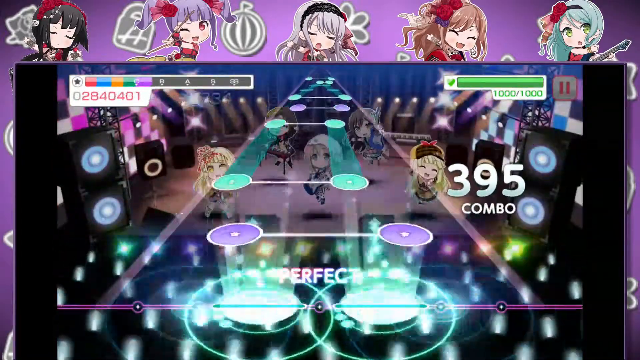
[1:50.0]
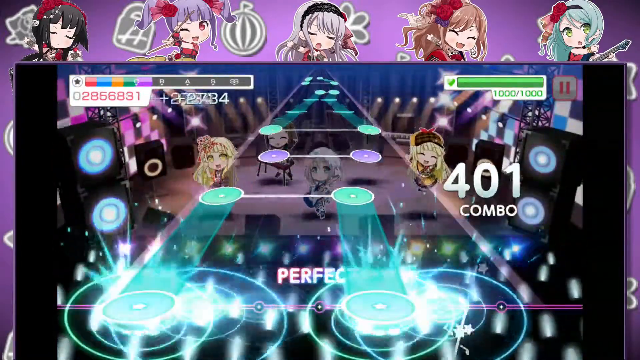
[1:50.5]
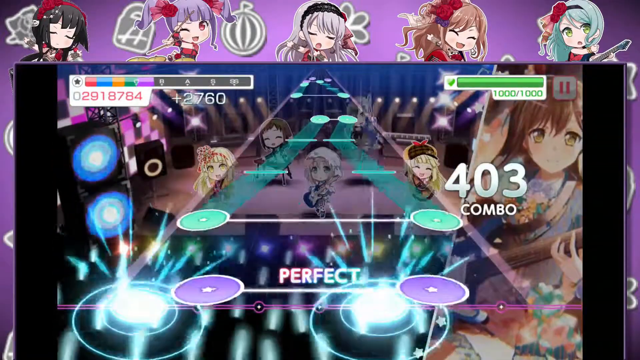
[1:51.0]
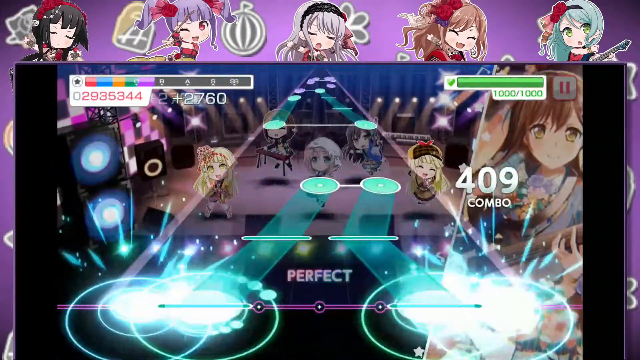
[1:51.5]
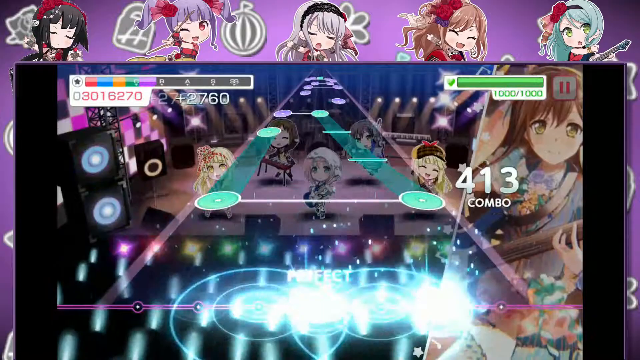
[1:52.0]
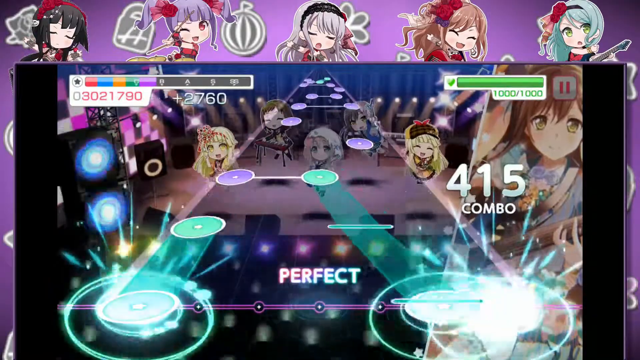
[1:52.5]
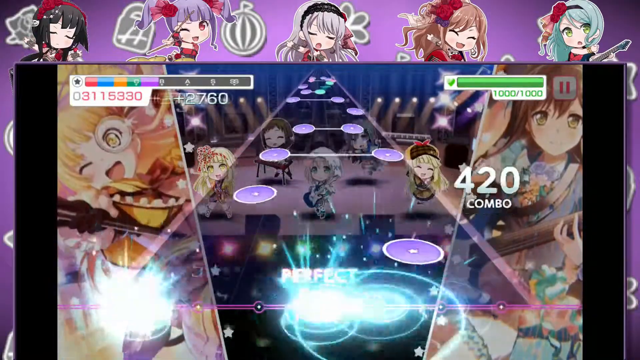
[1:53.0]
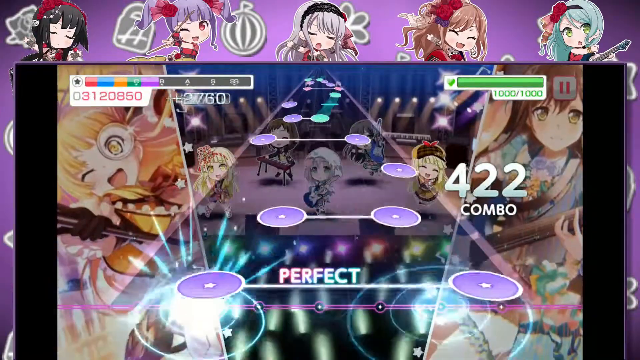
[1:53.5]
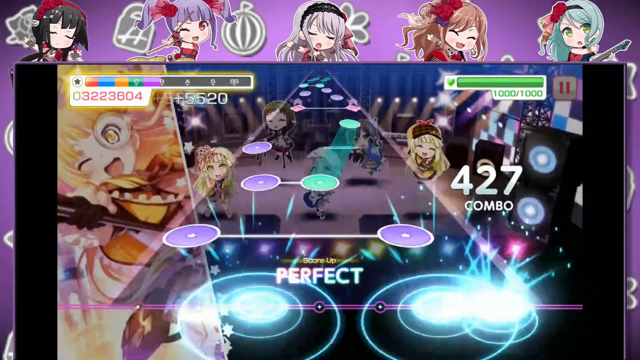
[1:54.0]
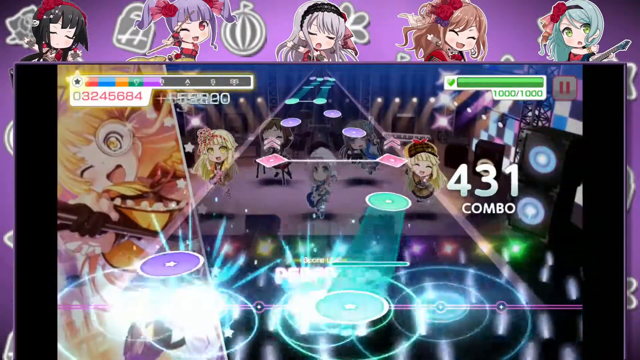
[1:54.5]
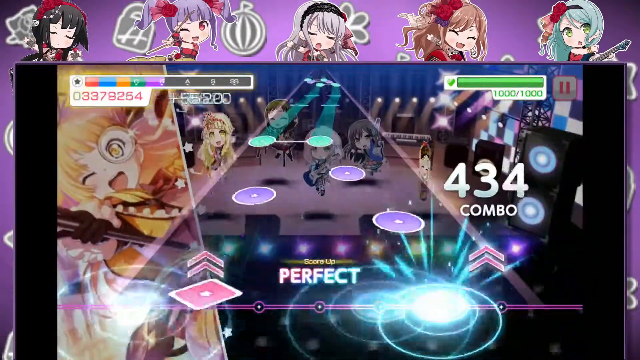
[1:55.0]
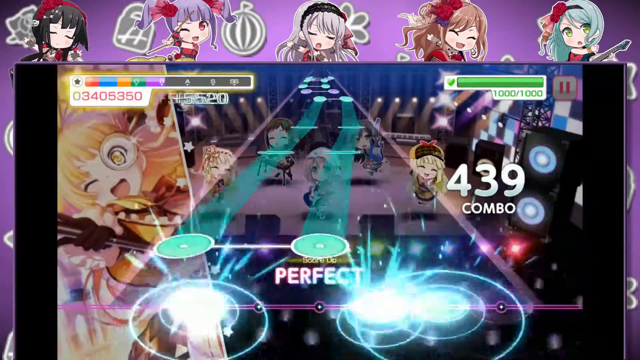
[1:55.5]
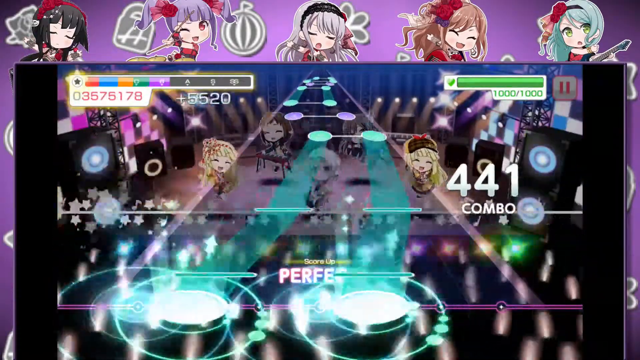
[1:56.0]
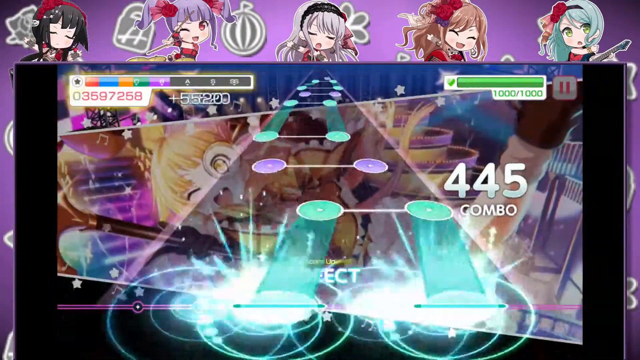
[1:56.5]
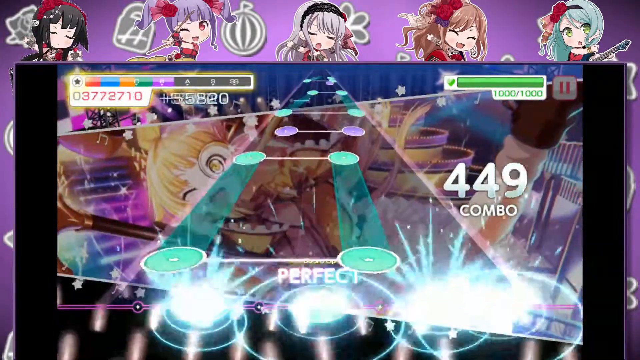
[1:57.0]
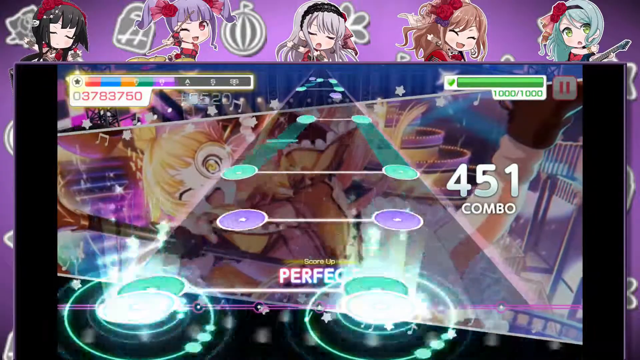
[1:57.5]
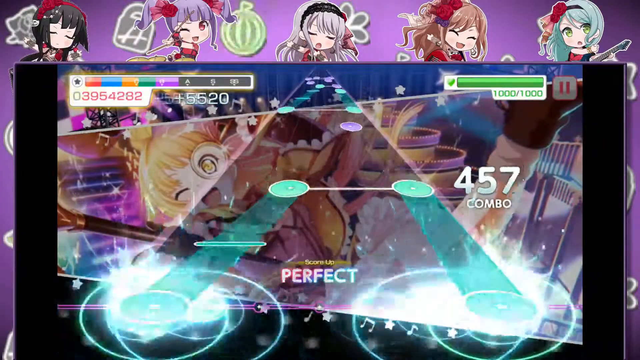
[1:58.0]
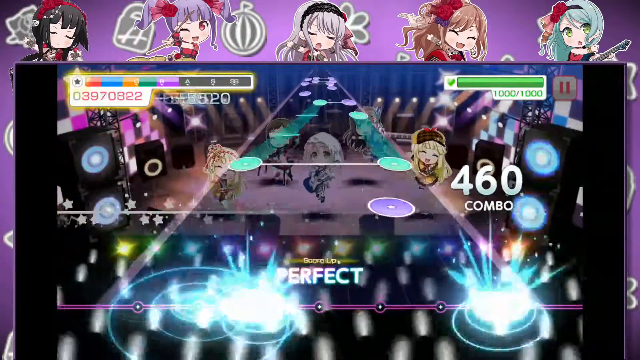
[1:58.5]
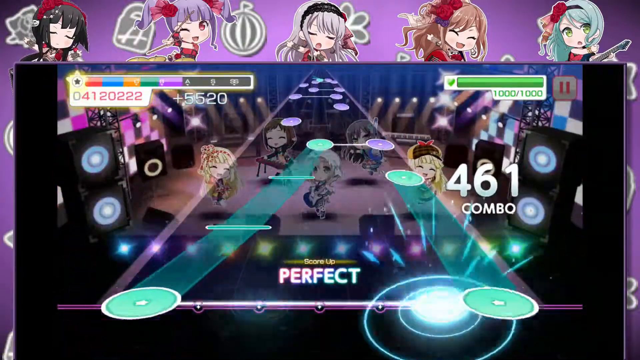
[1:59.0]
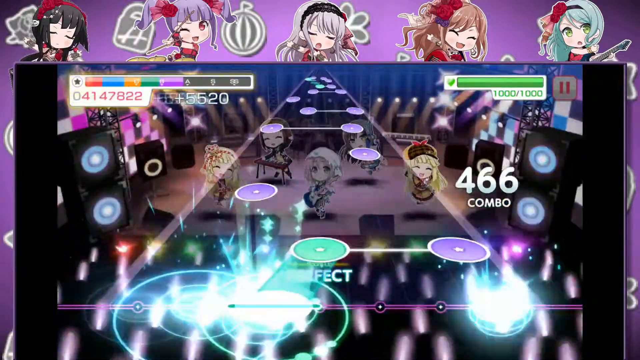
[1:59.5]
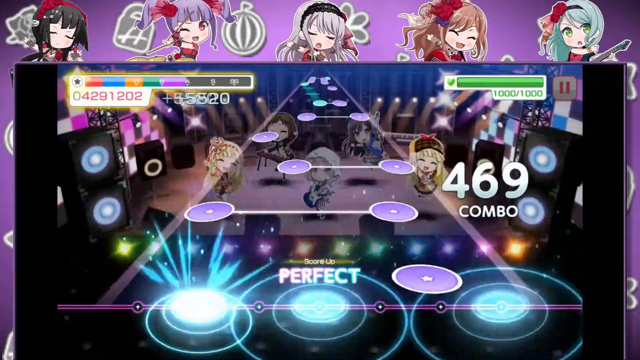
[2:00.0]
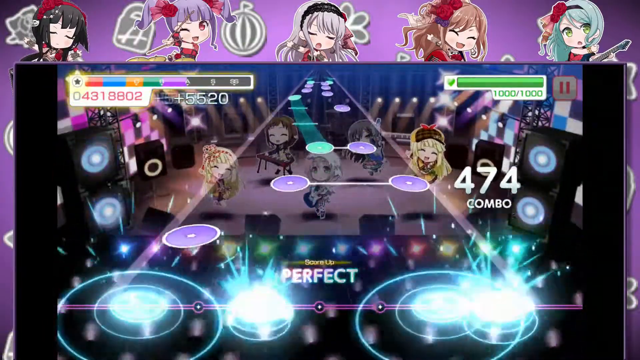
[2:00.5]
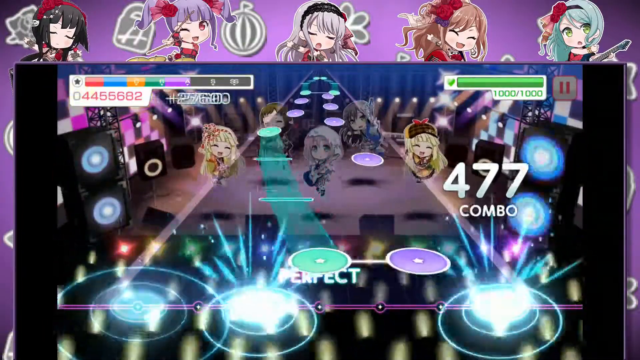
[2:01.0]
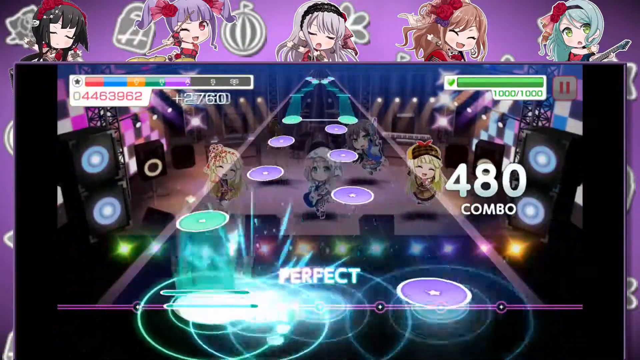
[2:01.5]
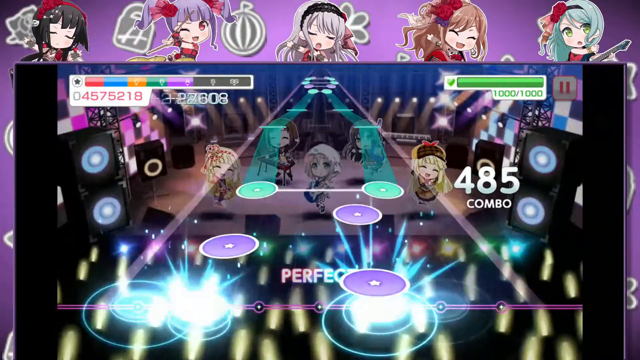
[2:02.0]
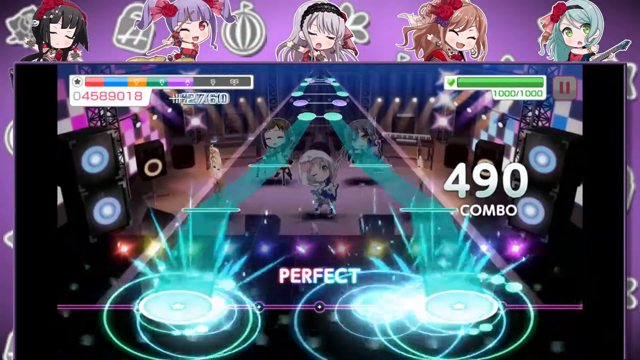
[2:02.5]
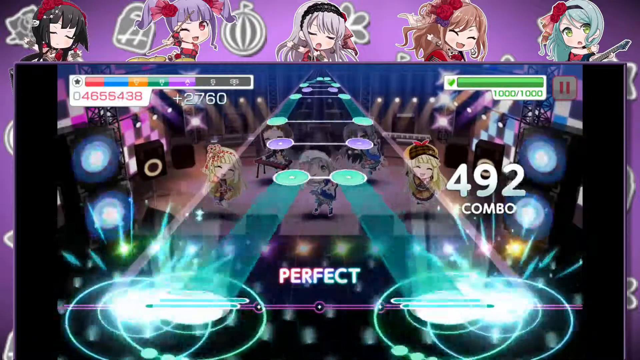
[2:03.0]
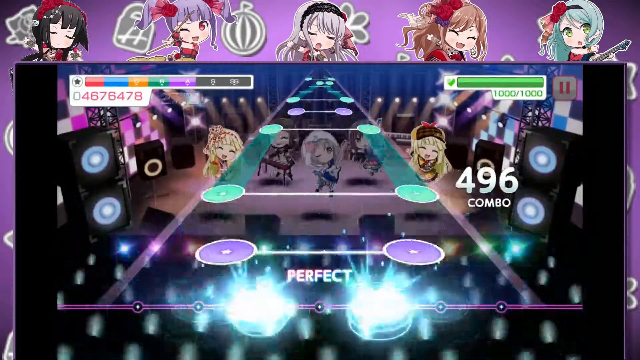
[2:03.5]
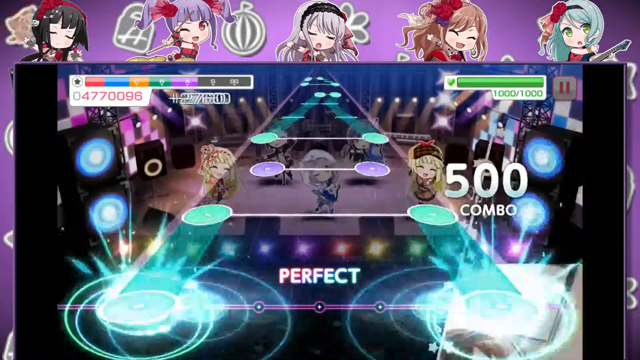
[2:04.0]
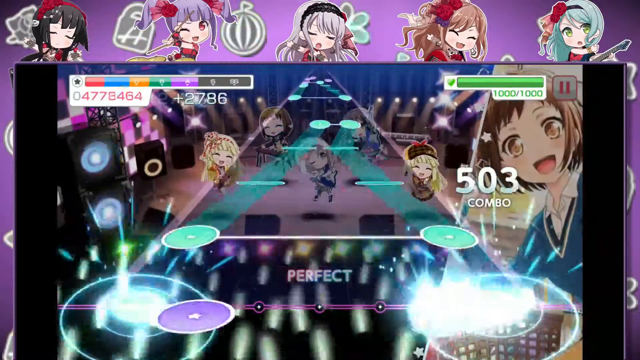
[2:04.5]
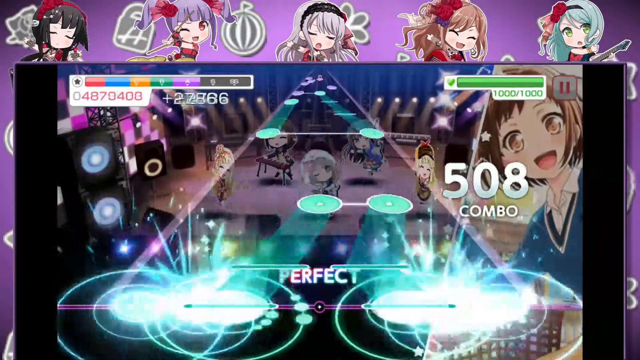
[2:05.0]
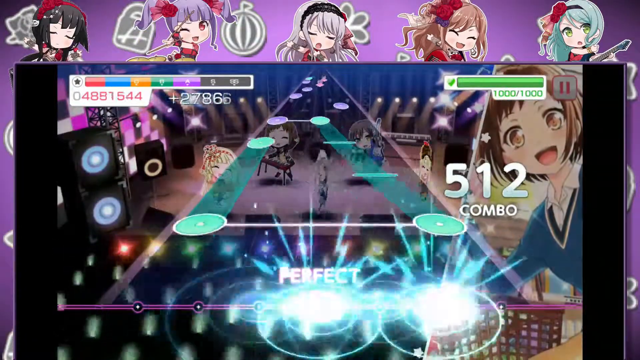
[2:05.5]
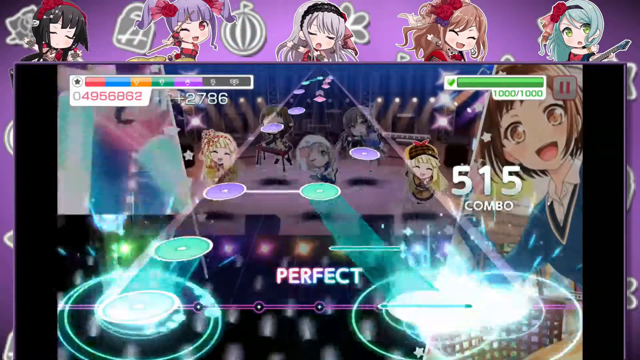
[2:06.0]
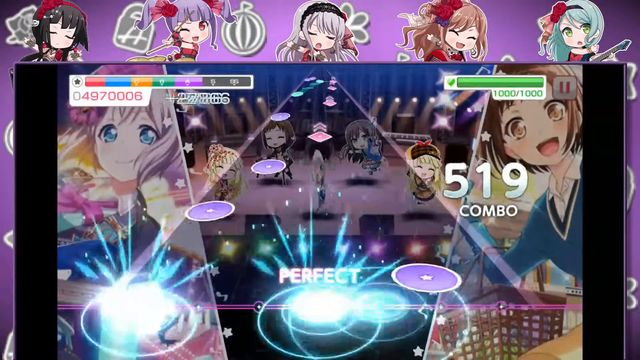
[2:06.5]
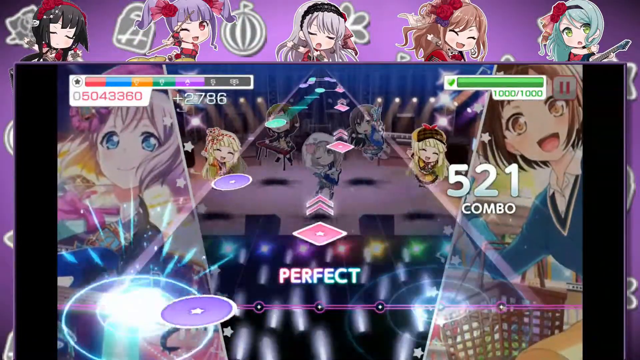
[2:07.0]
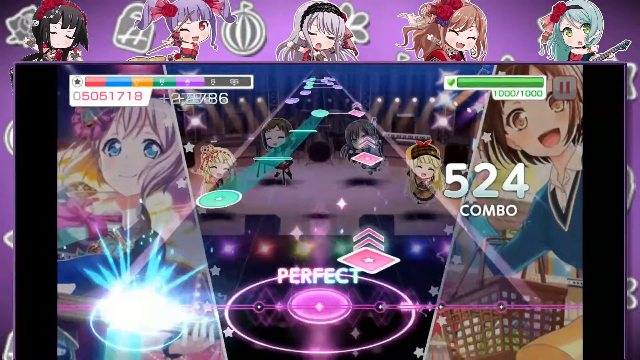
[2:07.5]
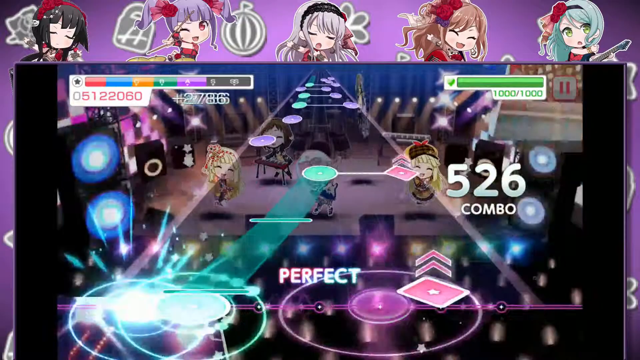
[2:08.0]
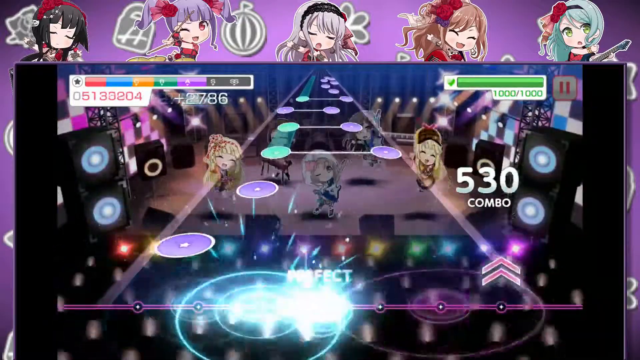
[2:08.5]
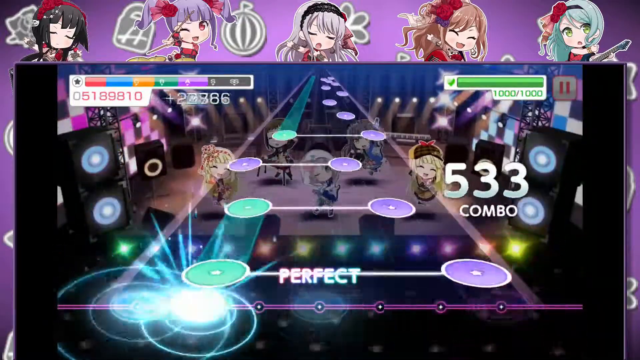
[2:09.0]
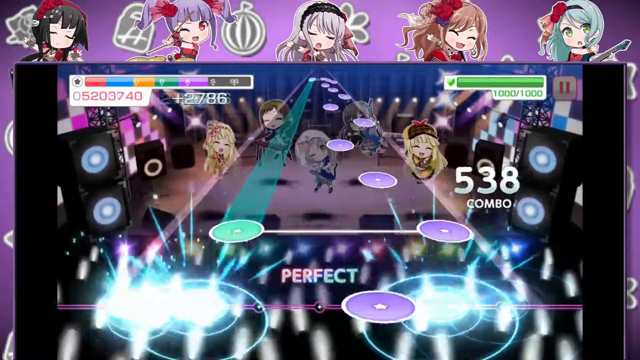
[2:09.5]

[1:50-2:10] A mobile rhythm game is playing on a phone, in the middle of a song. Buttons, mainly blue and purple, travel along what looks like the shape of a guitar, and when they reach the bottom border of the screen they have to be pressed in time to light them up. Many buttons require more than a single press: some must be held down as long as the game requires, and others must be pressed simultaneously. Behind the guitar, an anime chibi band is playing, and various cartoons of the girls appear in the middle of the screen as the combo progresses, each showing a girl either smiling or playing an instrument. Guitars and drums are clearly visible. The combo reaches around 395.